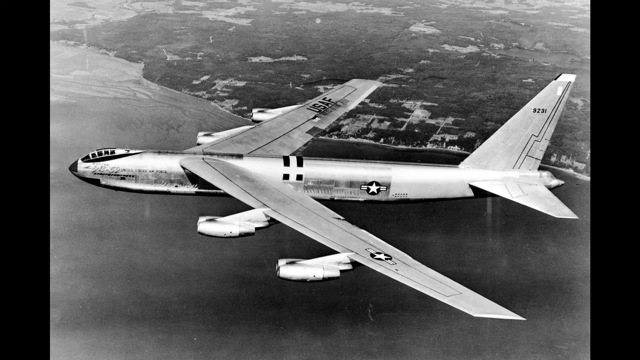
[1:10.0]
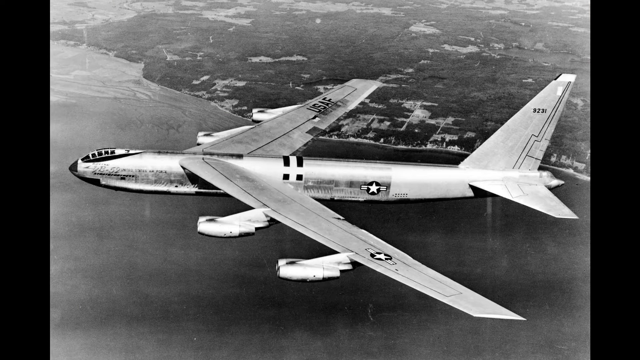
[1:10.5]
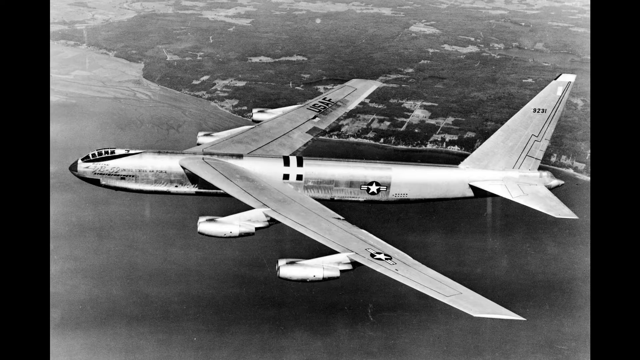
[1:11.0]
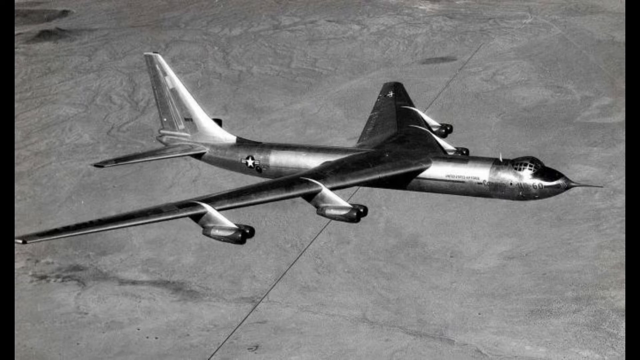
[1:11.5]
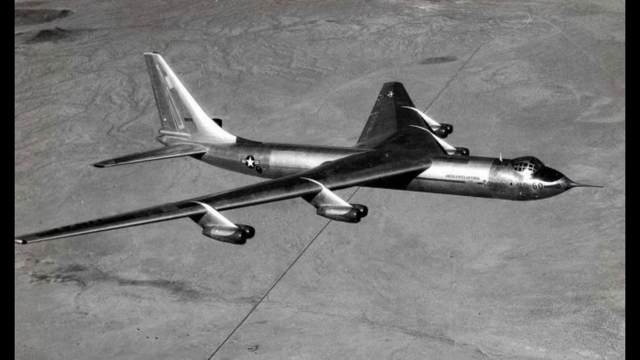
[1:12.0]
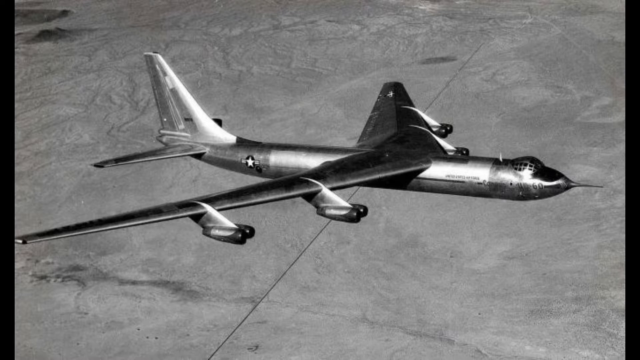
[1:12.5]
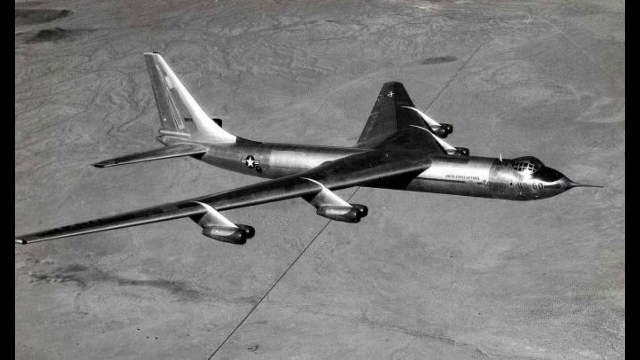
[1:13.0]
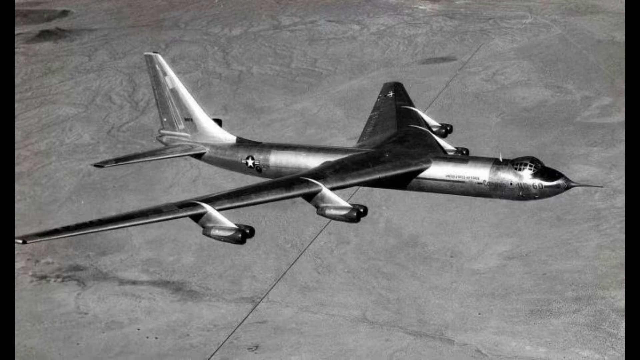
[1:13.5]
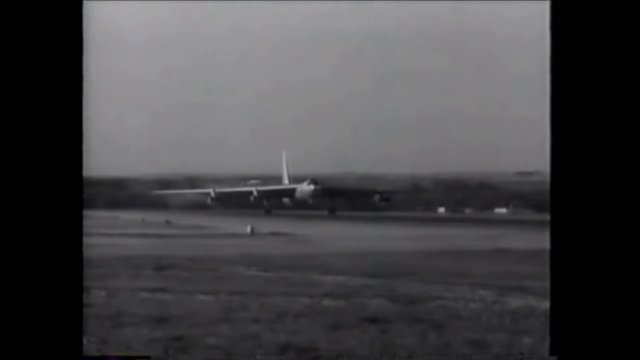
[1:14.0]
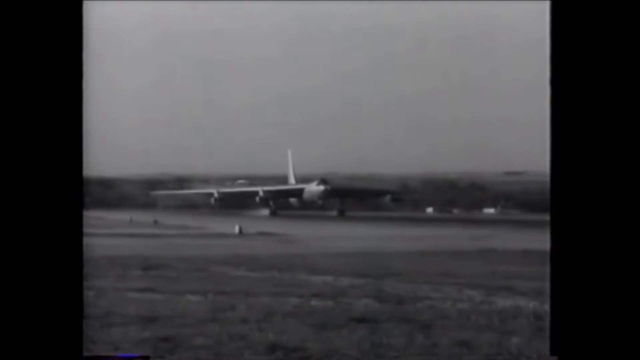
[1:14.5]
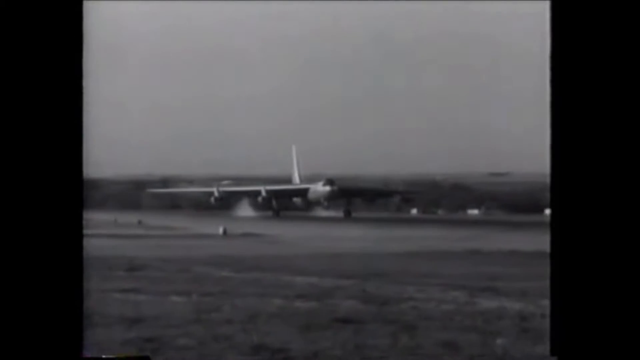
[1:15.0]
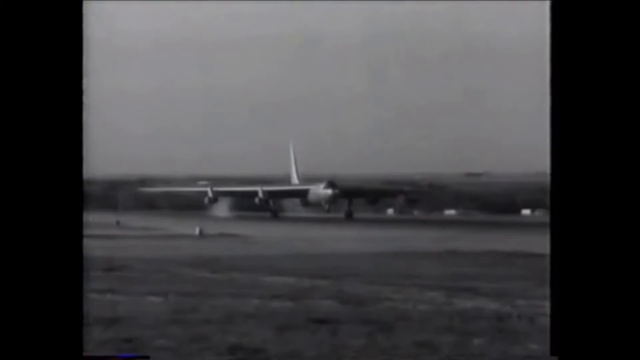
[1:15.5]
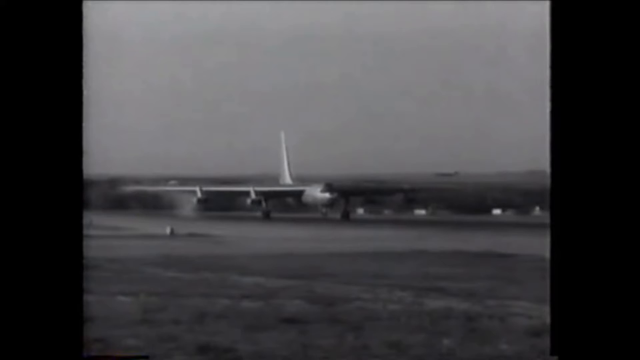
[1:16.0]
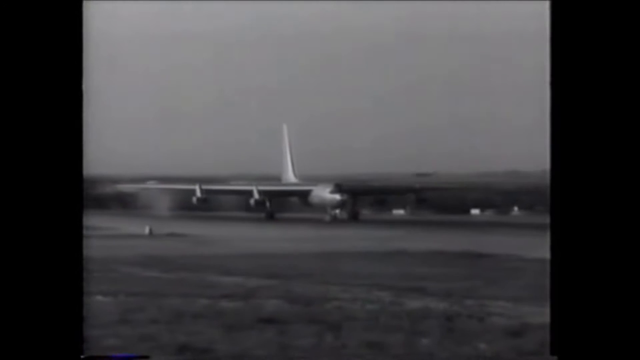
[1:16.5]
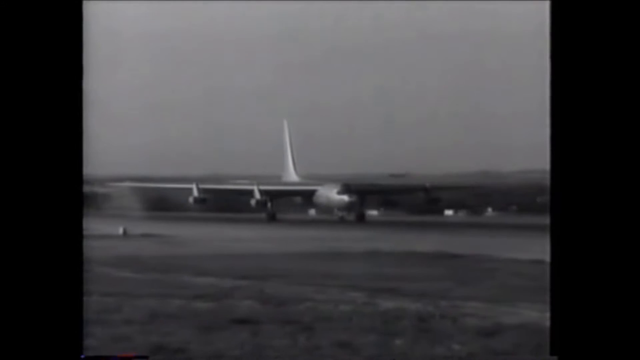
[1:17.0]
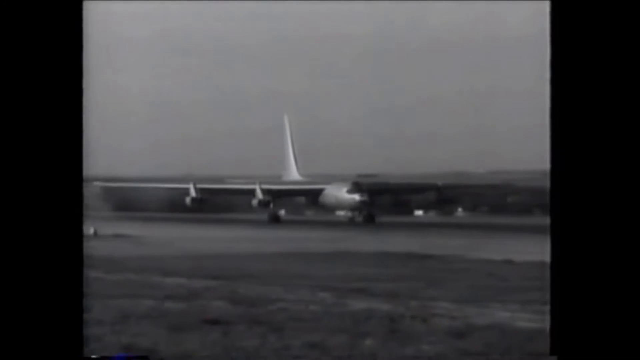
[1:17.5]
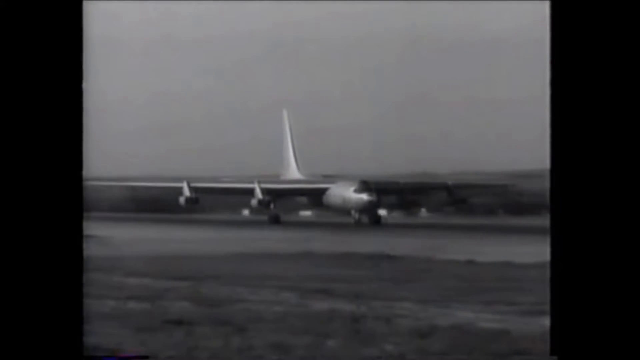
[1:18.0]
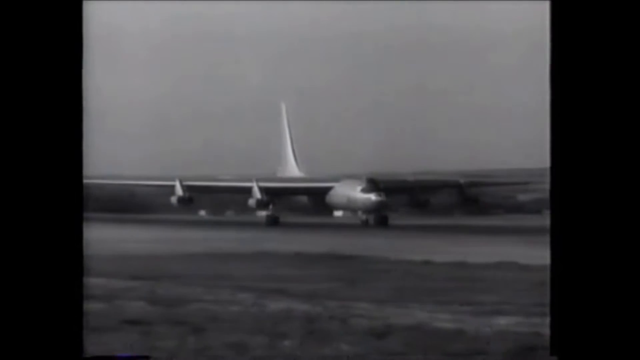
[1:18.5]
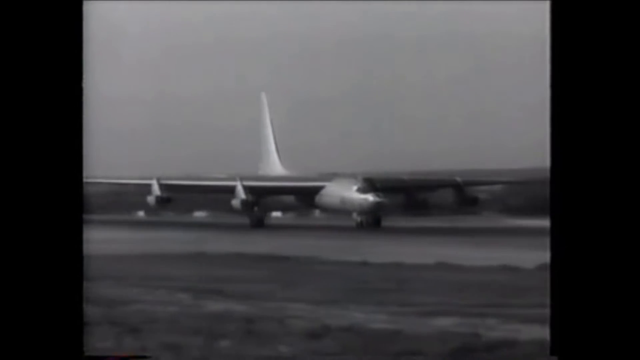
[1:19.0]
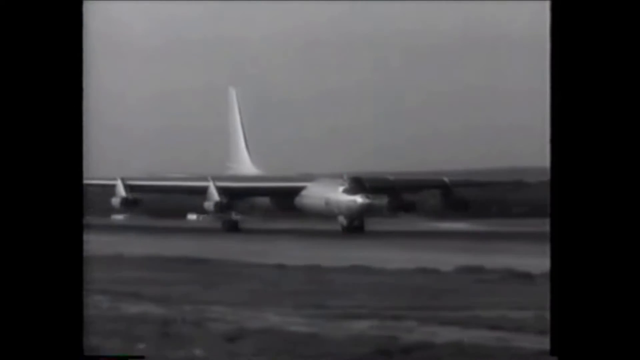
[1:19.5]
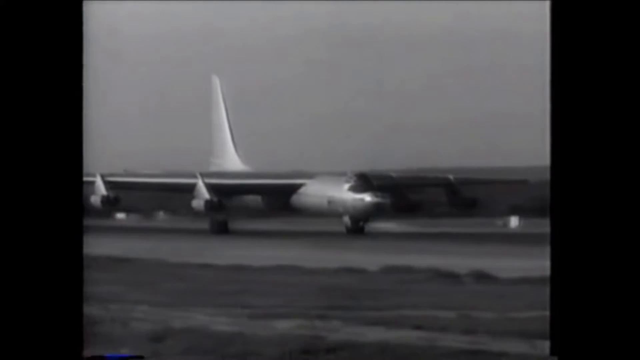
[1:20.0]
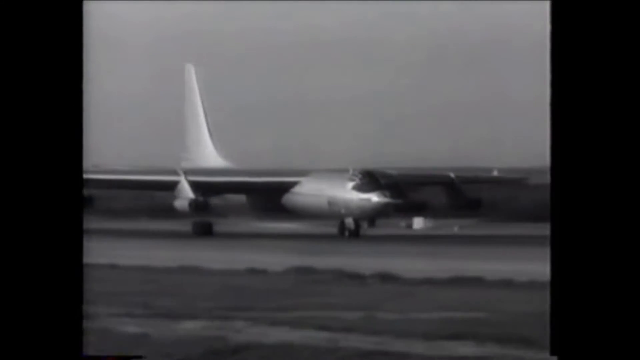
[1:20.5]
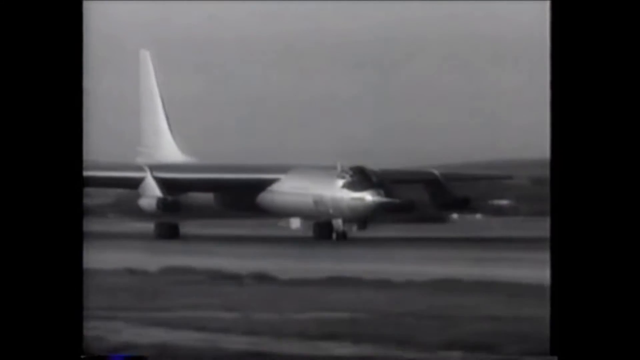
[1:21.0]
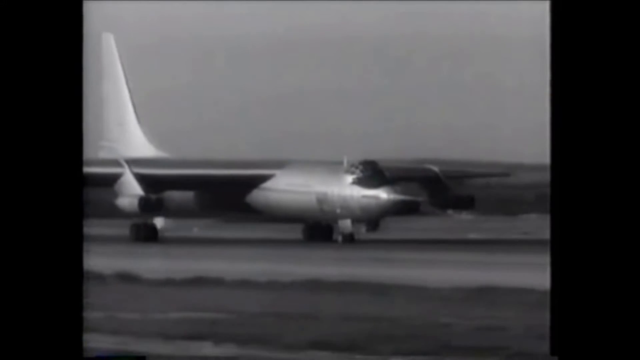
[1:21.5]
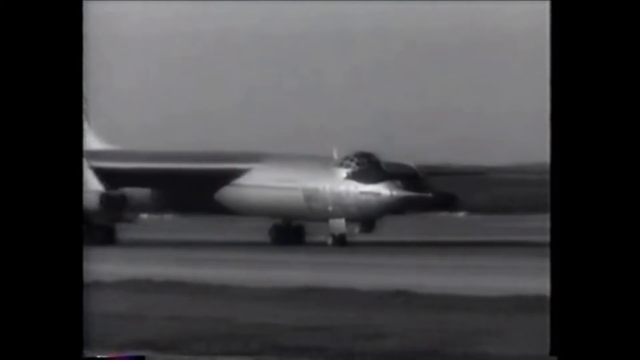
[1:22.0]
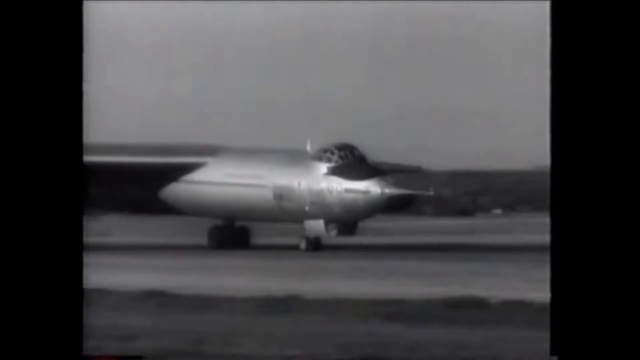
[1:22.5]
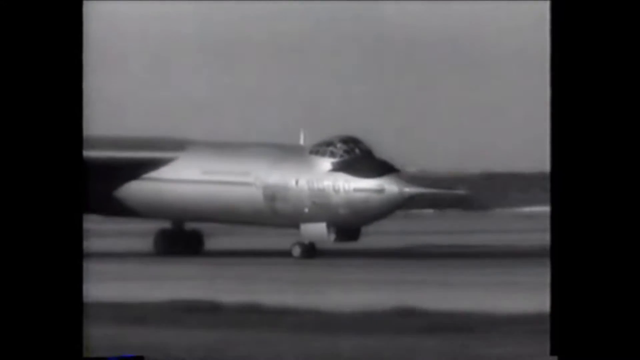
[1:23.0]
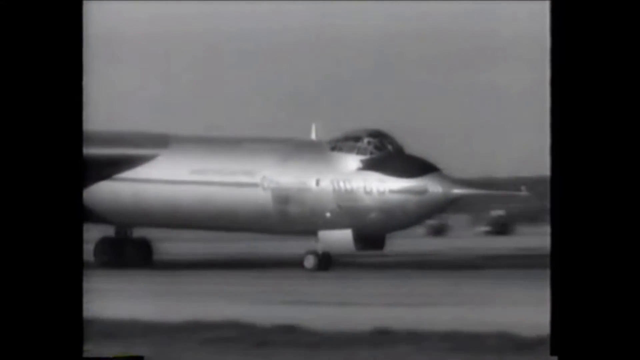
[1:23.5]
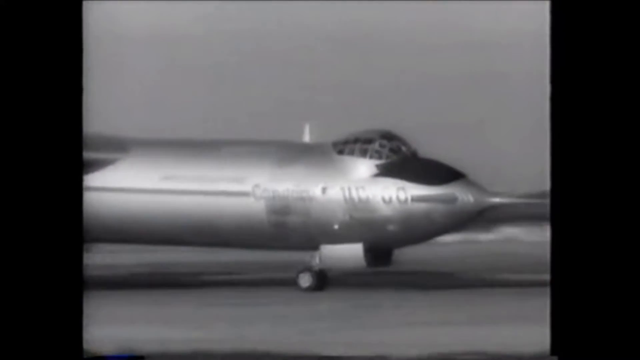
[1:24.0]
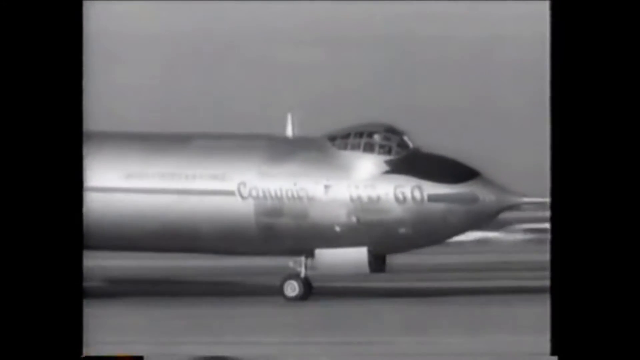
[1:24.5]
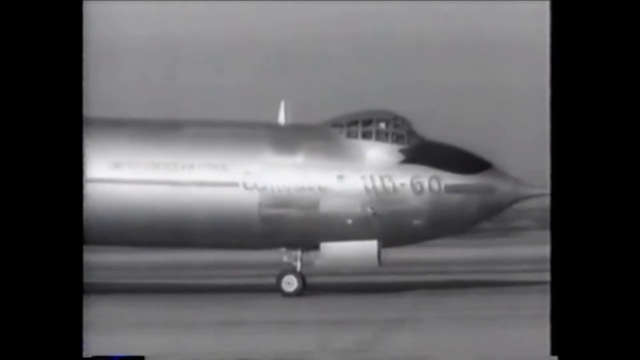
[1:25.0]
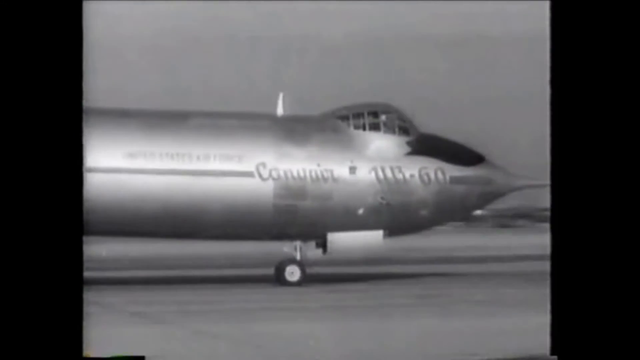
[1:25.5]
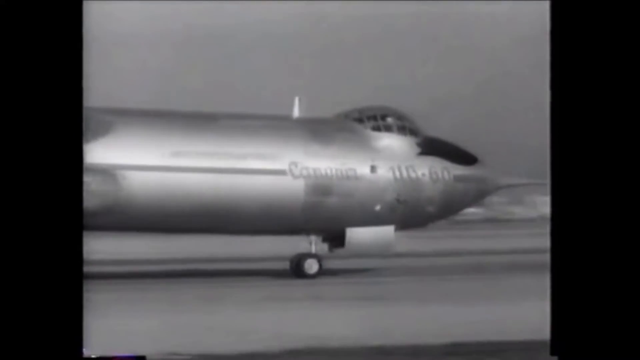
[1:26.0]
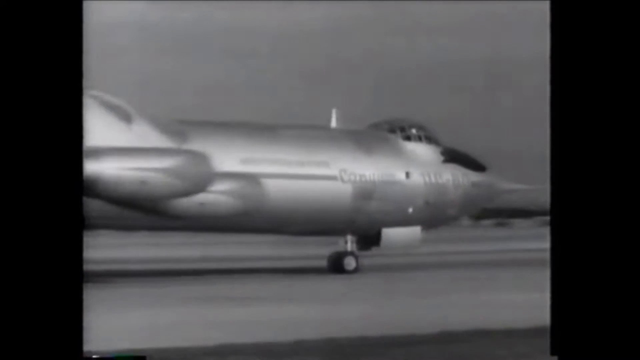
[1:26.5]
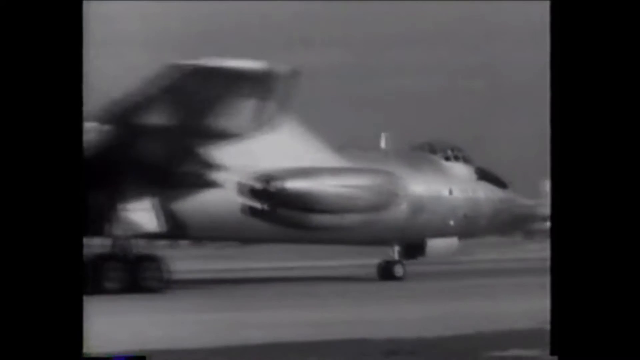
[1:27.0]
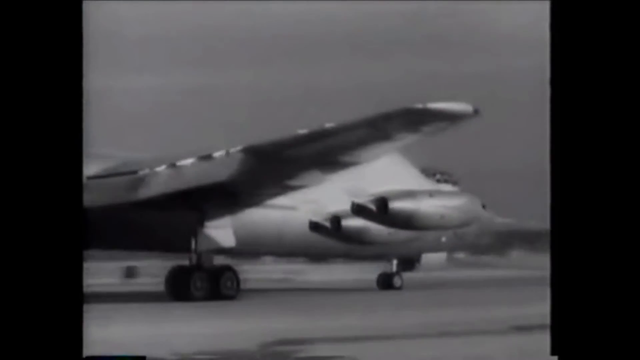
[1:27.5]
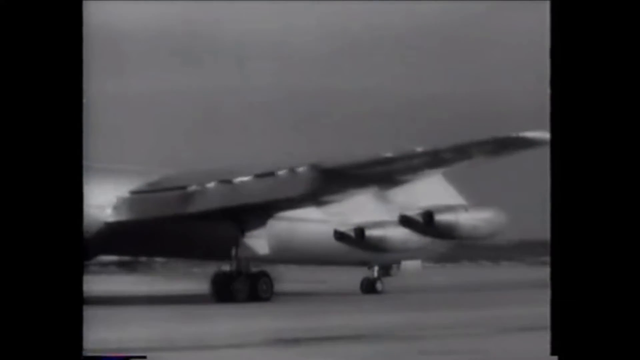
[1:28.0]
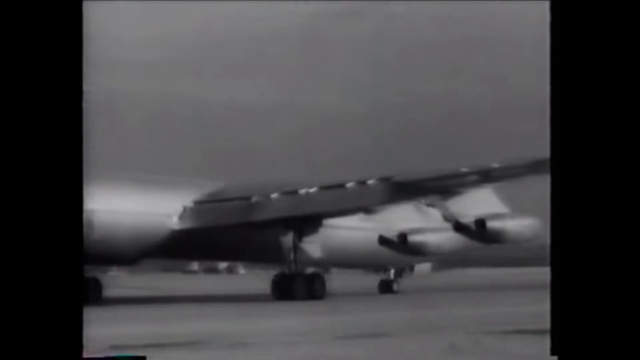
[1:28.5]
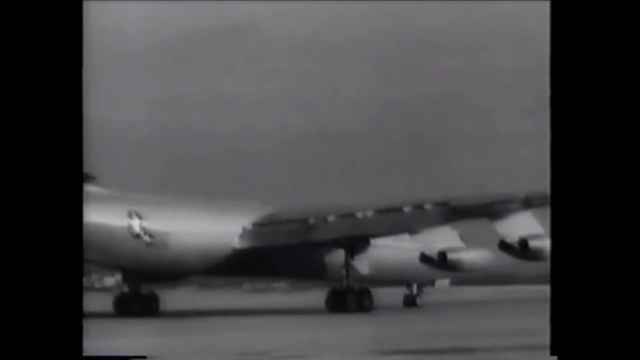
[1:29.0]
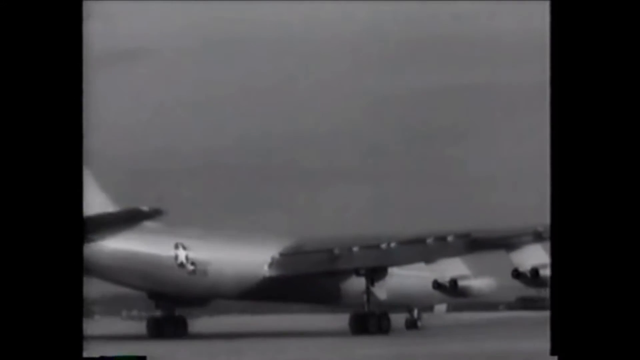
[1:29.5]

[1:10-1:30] Various still views of the B-36 in flight give way to footage of the B-36 taxiing on the runway. Some detail of the aircraft is visible while it moves, including writing on it that is not legible. Both the footage and the images are black and white; the footage is old, most likely from the 1950s, with very low clarity and resolution, so it looks blurry. In the footage the aircraft seems very shiny, shinier than in some of the still photos. All the images of the aircraft in flight appear to be over desert or barren land.